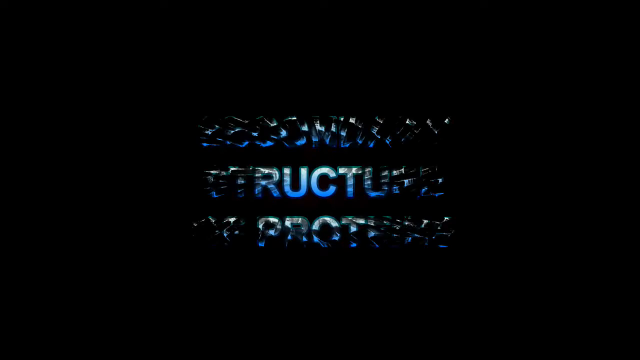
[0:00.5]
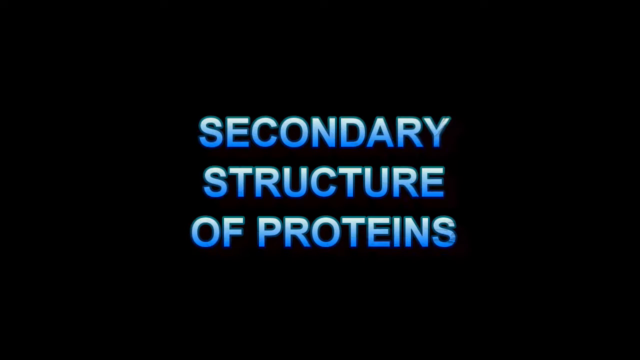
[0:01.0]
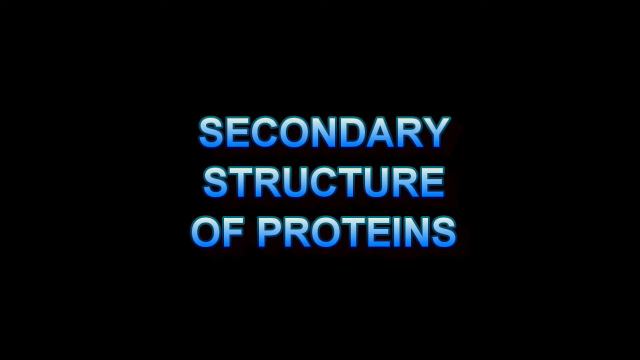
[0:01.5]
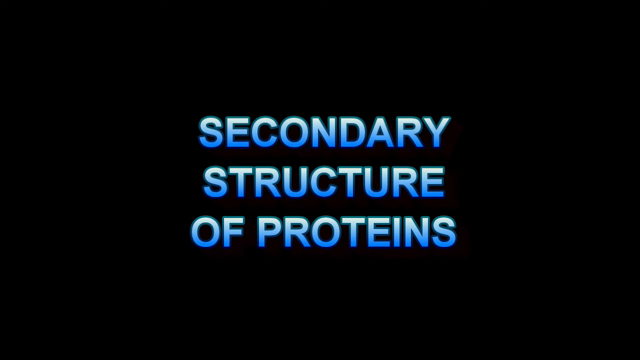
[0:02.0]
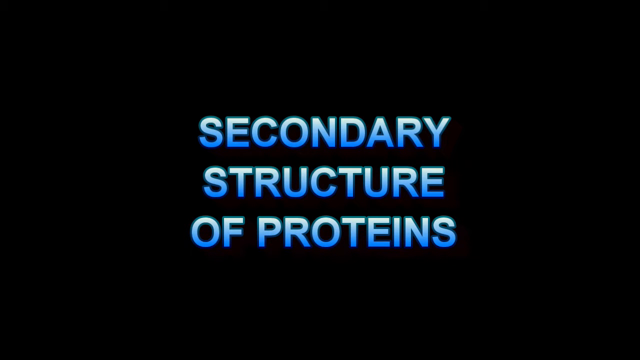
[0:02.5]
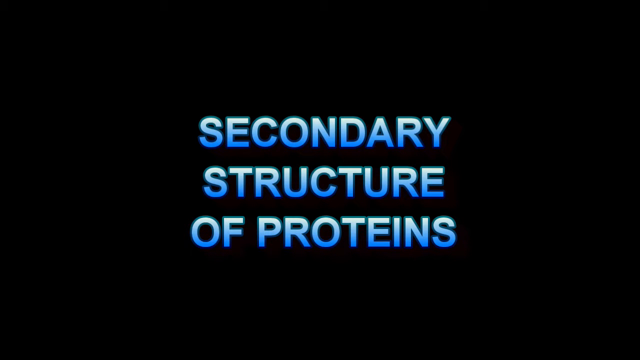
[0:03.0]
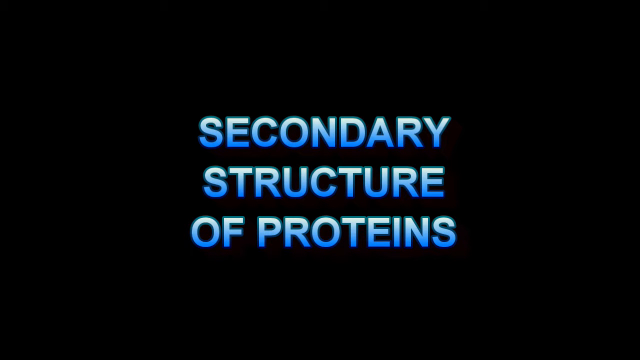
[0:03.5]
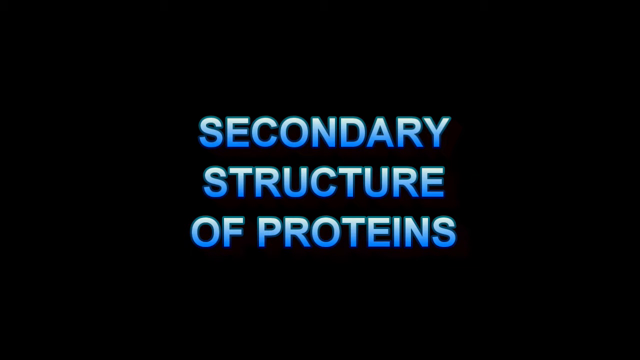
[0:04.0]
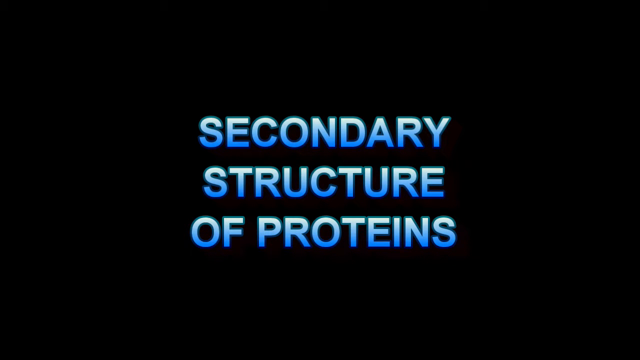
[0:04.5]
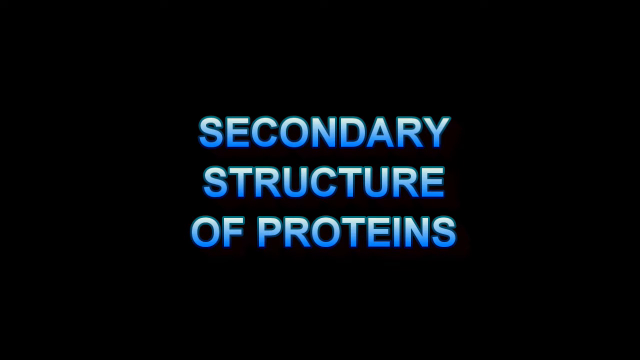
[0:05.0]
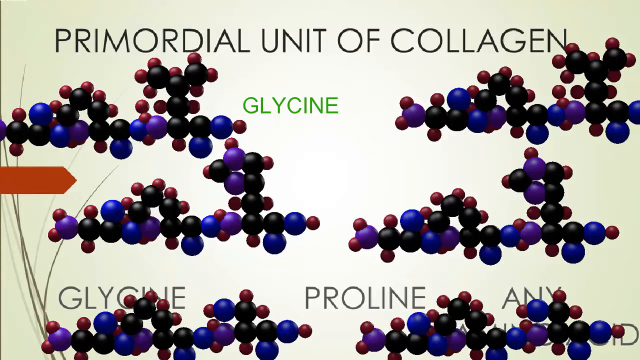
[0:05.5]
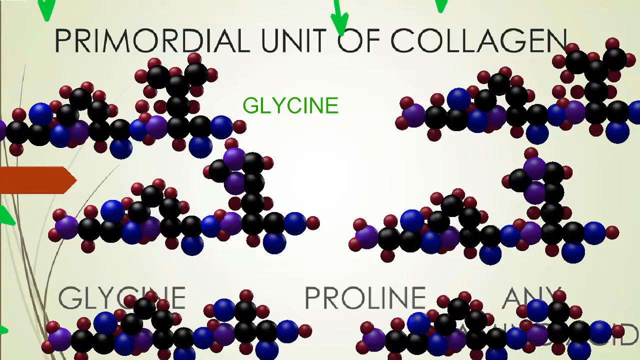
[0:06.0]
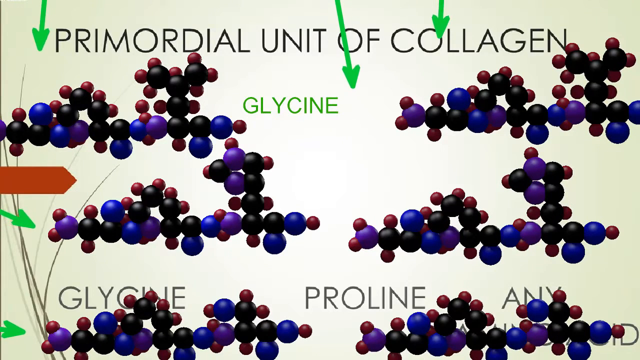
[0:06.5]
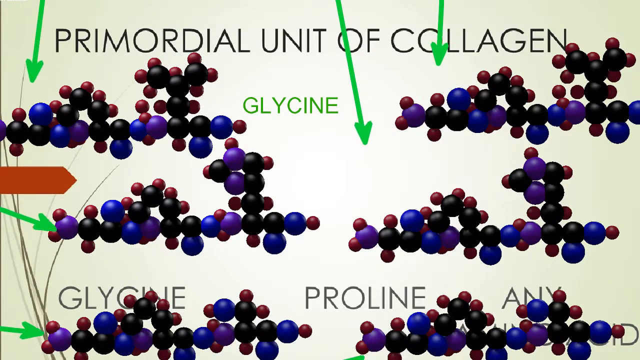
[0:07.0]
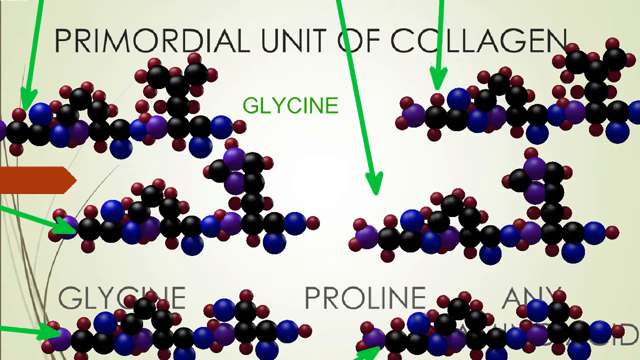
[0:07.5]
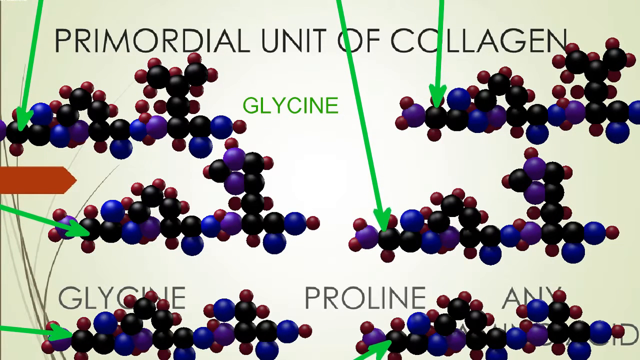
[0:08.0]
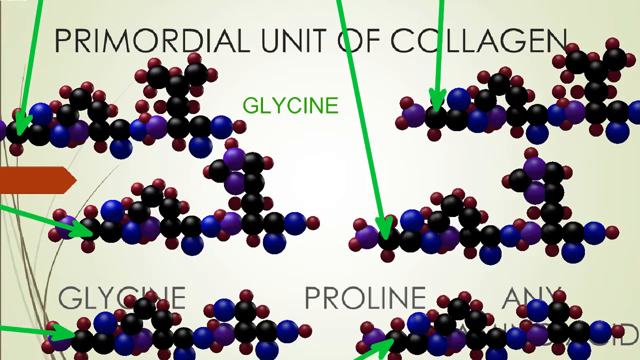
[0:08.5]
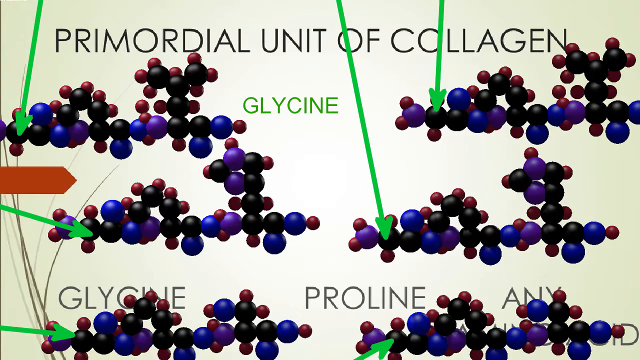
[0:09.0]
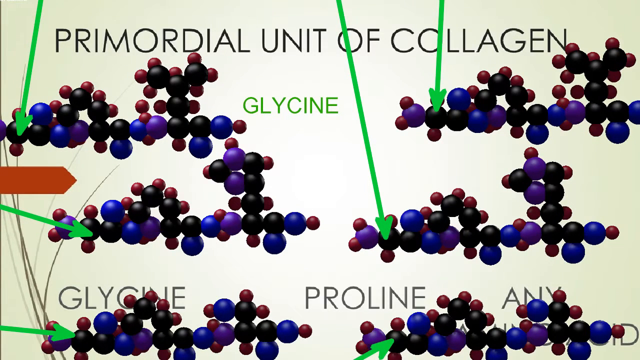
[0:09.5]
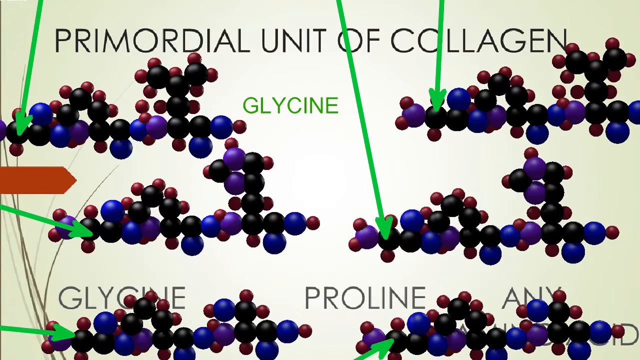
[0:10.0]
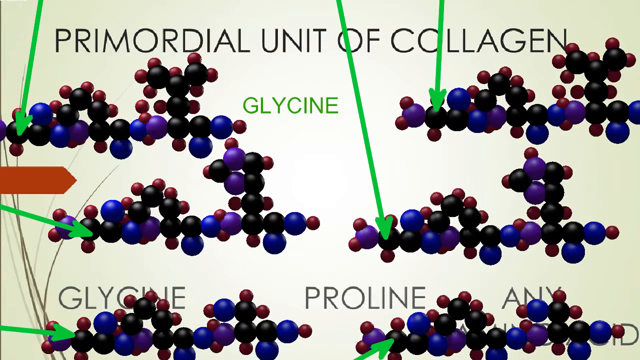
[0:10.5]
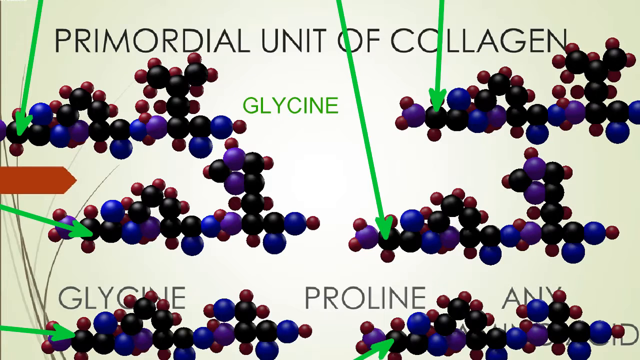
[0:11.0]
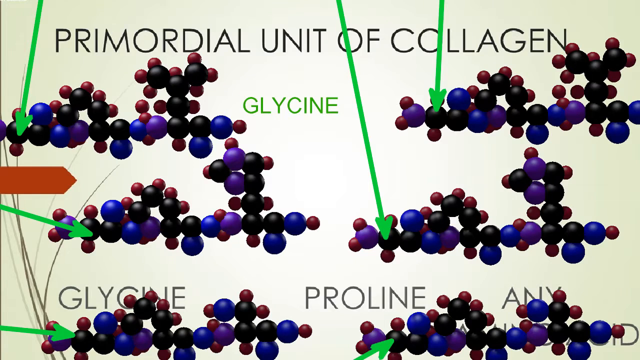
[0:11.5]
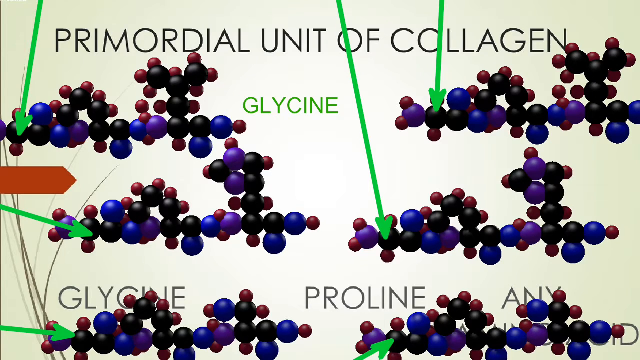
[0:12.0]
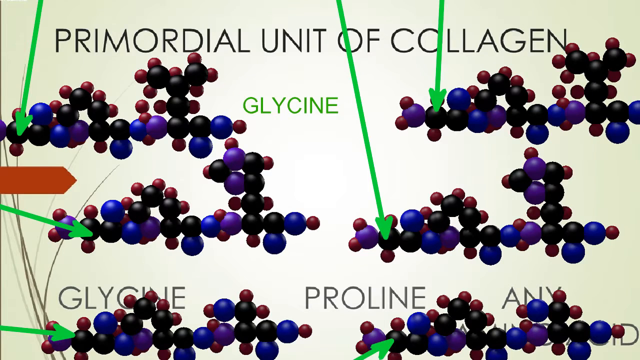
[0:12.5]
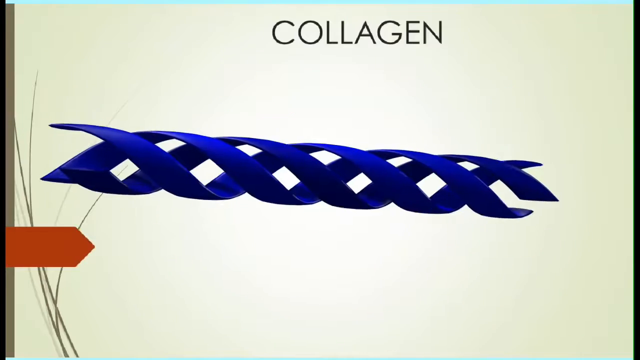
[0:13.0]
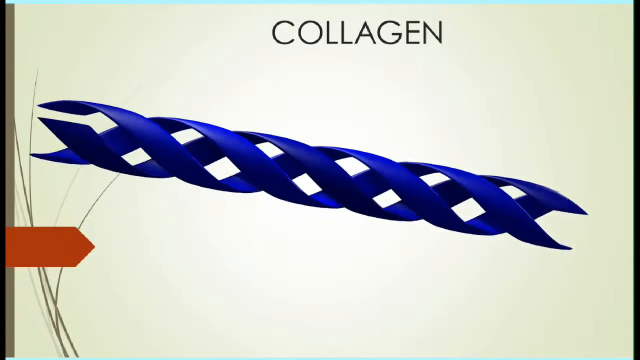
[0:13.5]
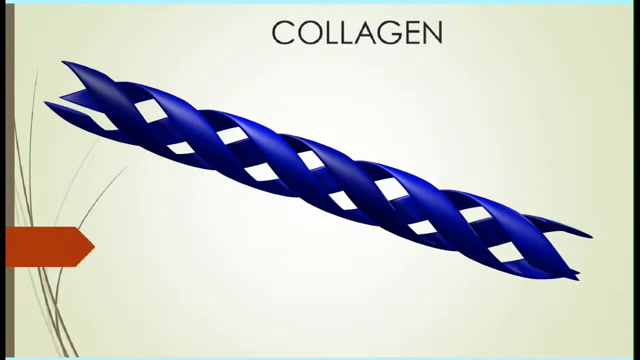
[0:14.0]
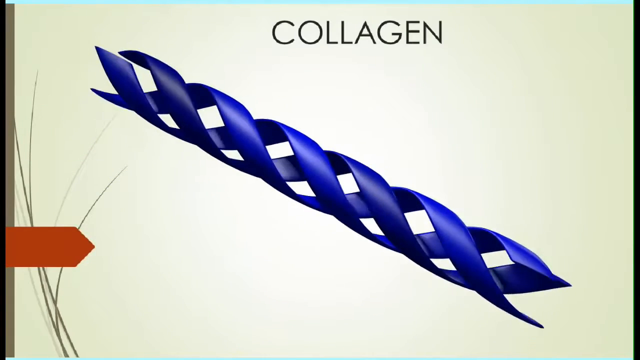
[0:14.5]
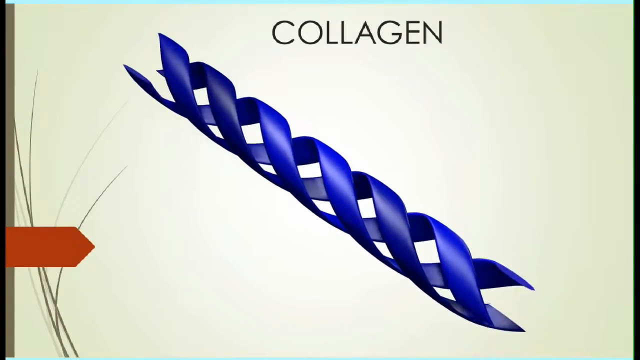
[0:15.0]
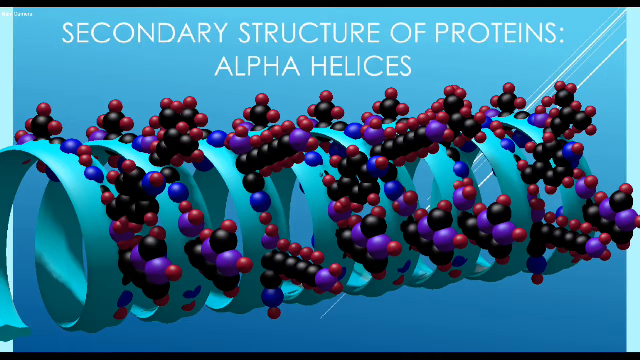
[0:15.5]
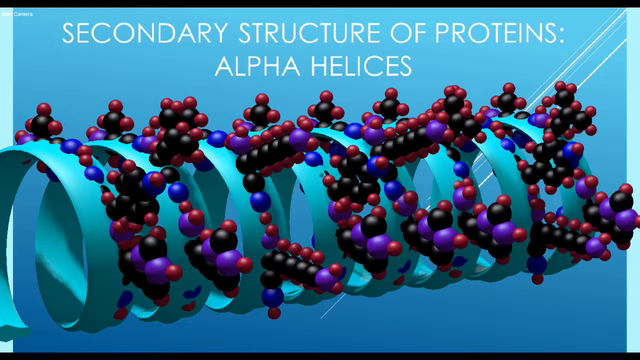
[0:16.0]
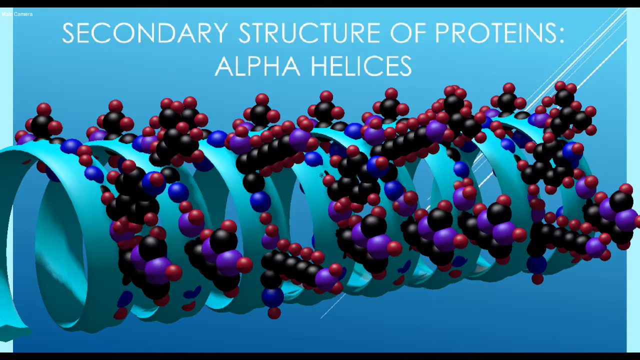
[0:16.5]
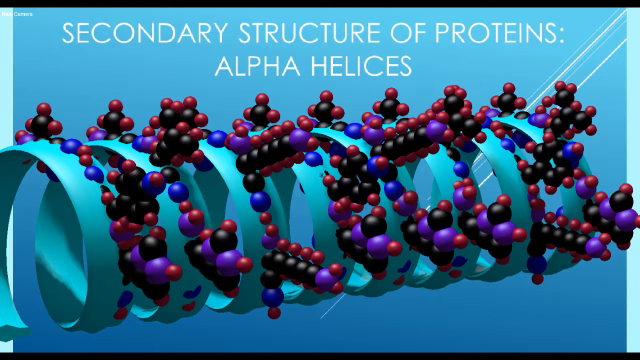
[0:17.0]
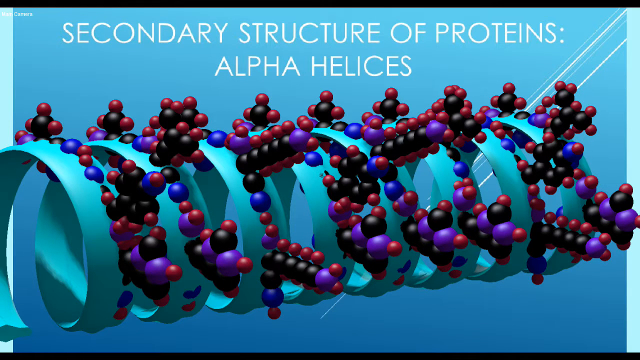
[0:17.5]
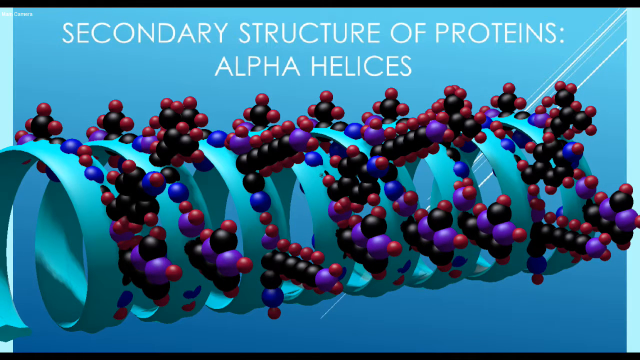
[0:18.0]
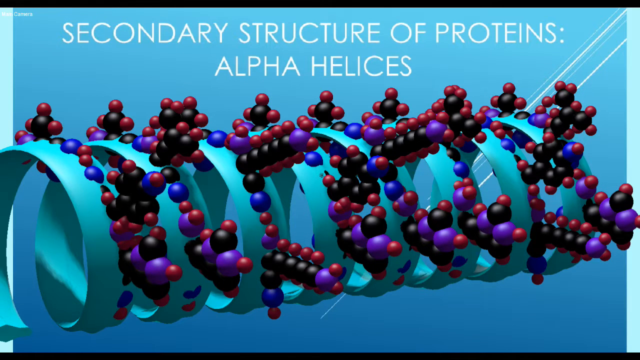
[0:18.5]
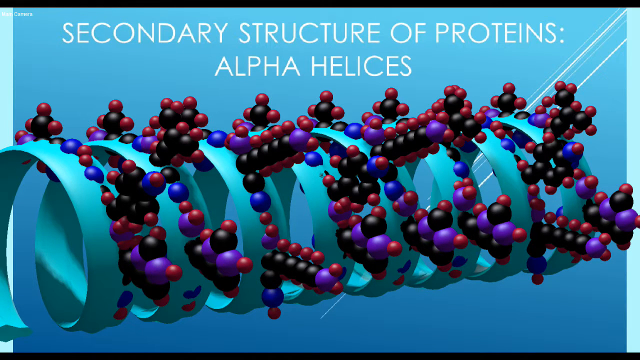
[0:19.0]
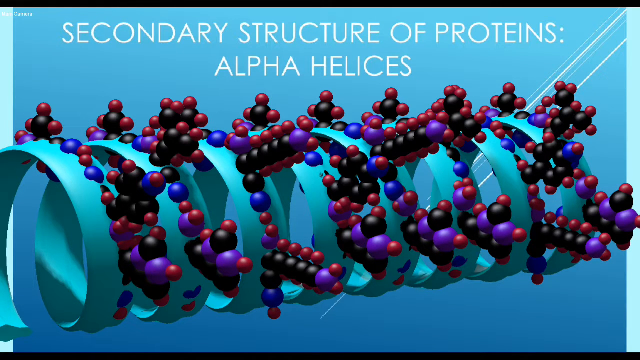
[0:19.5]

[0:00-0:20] The video opens on a black background, then text appears reading "secondary structure of protein"; each letter is blue on the bottom and white on the top. After a few seconds, what seems to be the primordial or predominant unit of collagen appears, made up of many small units, apparently cells, that are collagen units: some are black circles, some blue, some red and some purple. The scene then transitions to a blue, cylinder-like spindle with the text "collagen" above it. The scene changes again to "secondary structure of protein alpha helices", showing a blue cylinder covered in black, red, blue and purple circles against a dark blue background, the little circles covering the entire spindle.